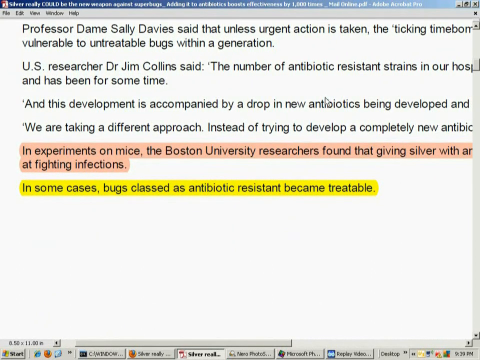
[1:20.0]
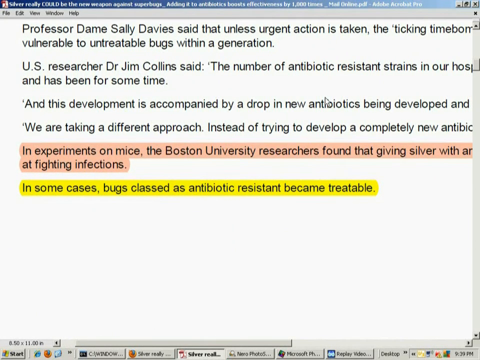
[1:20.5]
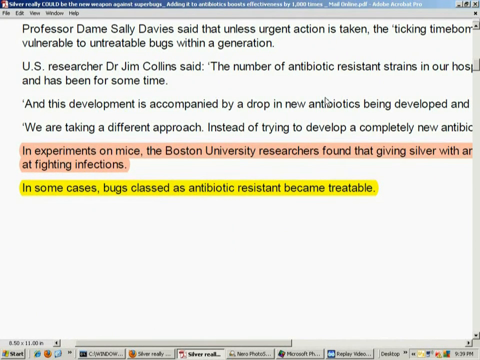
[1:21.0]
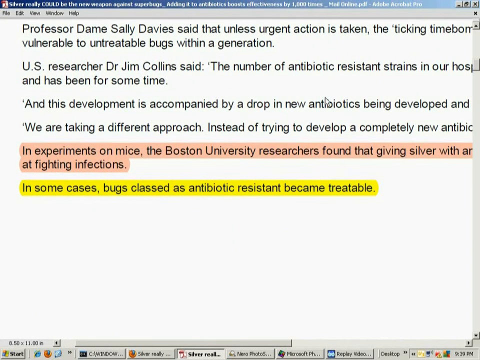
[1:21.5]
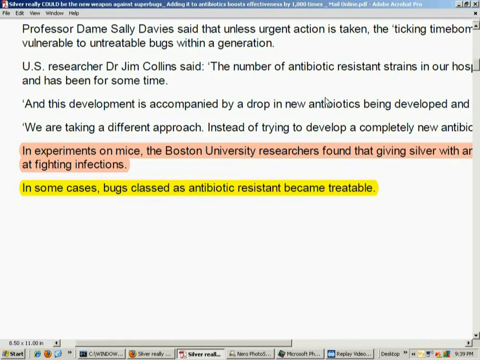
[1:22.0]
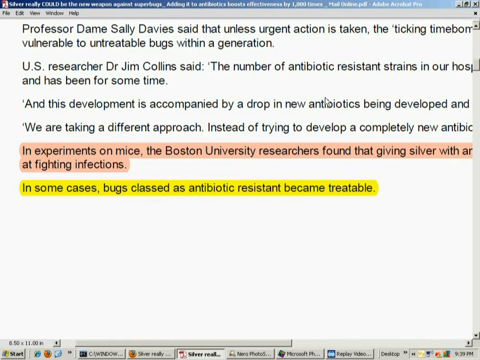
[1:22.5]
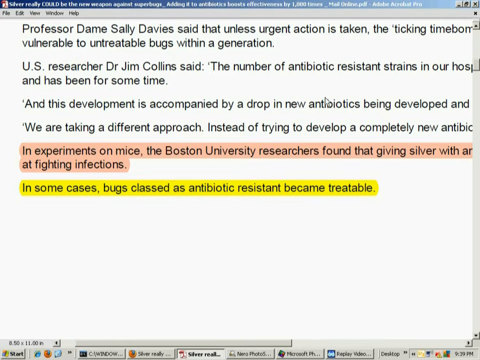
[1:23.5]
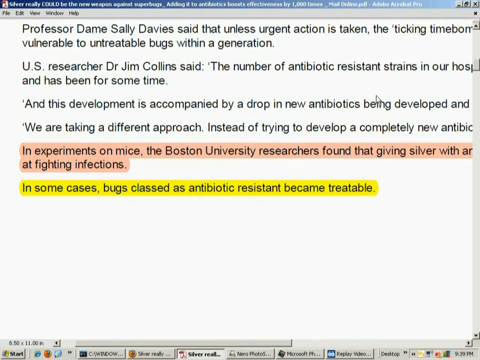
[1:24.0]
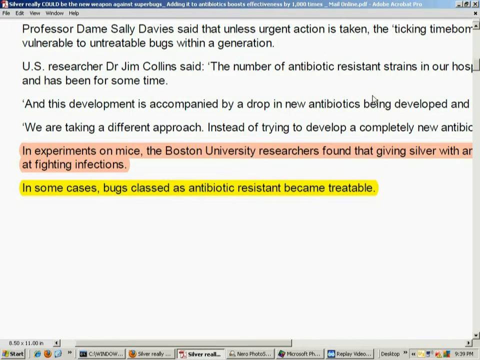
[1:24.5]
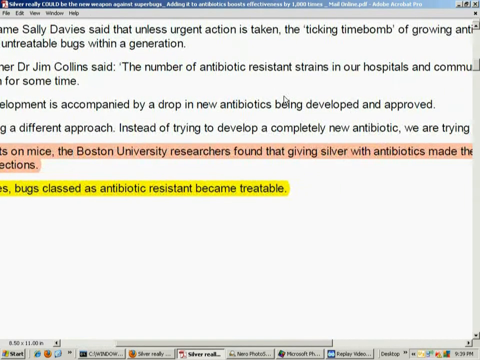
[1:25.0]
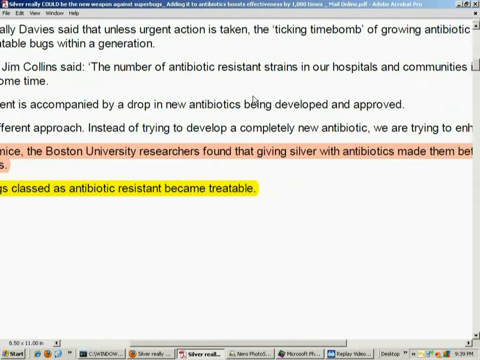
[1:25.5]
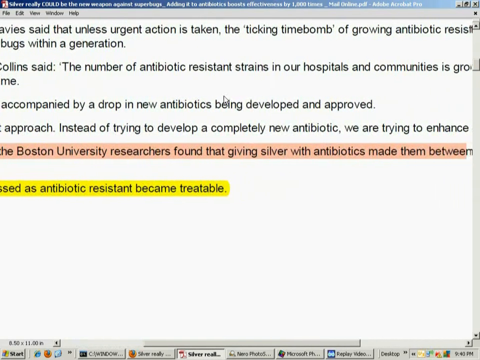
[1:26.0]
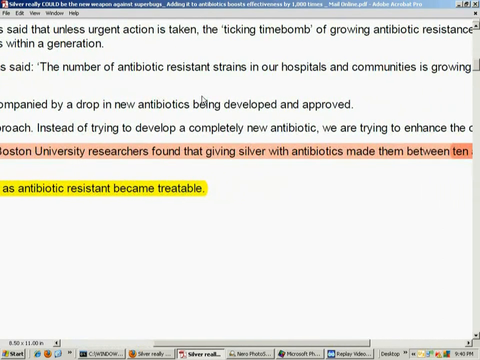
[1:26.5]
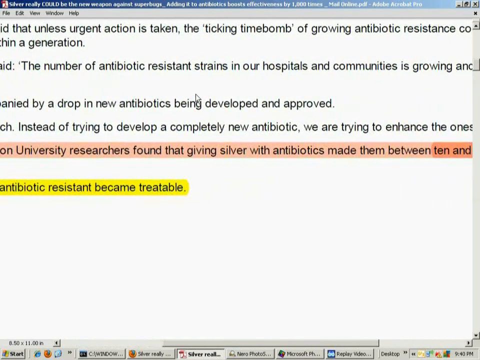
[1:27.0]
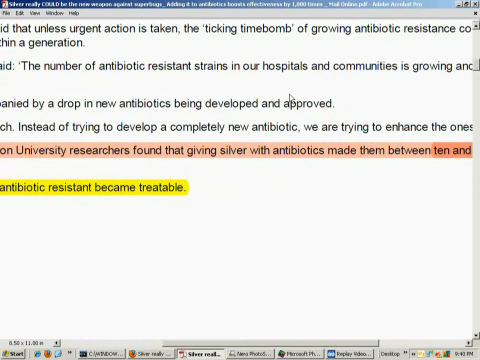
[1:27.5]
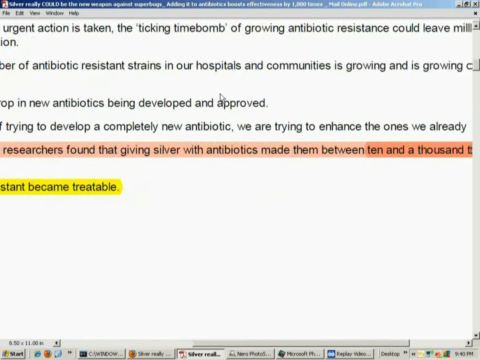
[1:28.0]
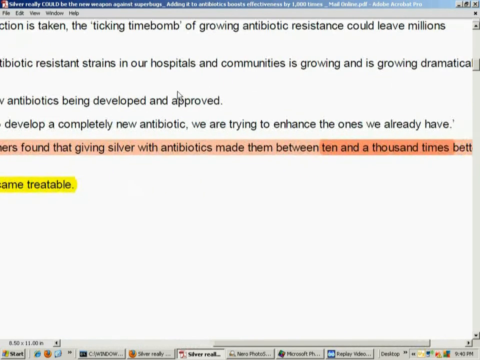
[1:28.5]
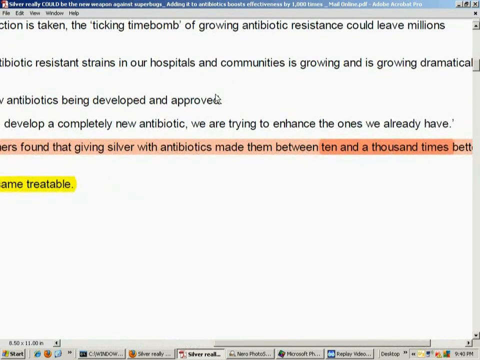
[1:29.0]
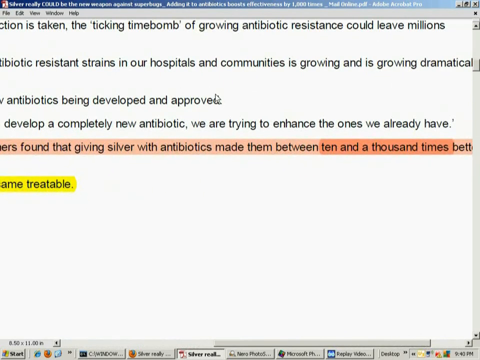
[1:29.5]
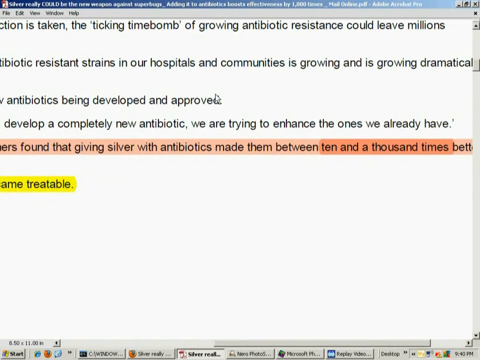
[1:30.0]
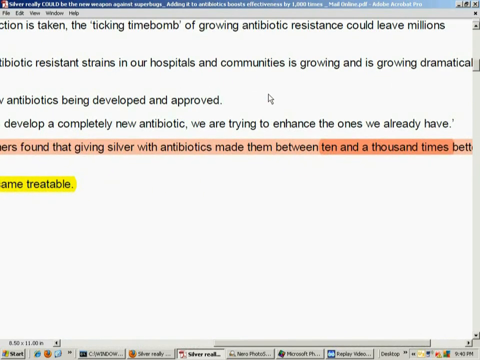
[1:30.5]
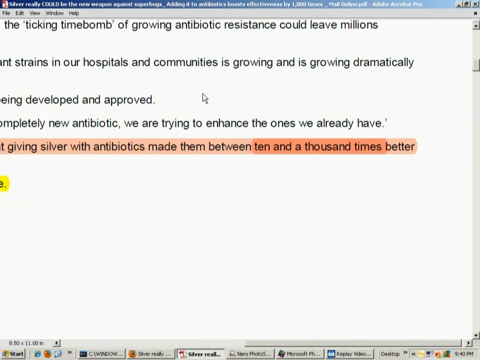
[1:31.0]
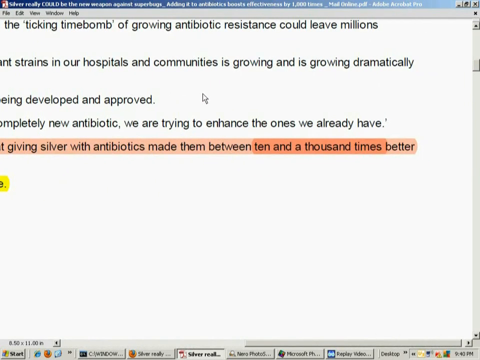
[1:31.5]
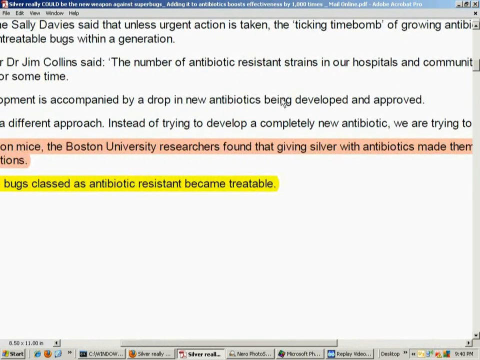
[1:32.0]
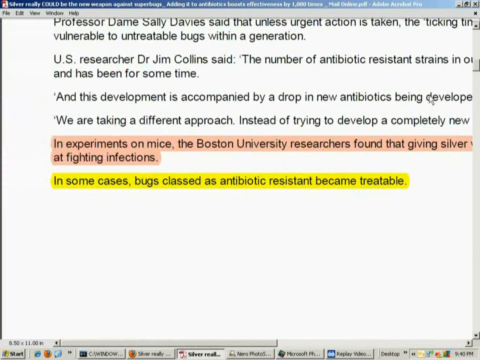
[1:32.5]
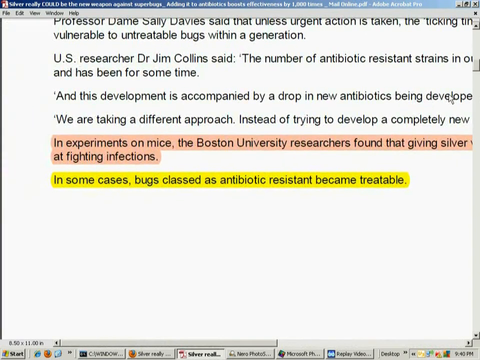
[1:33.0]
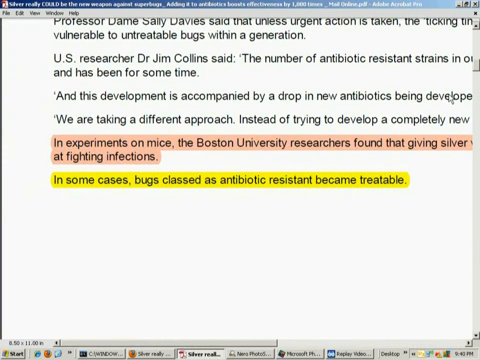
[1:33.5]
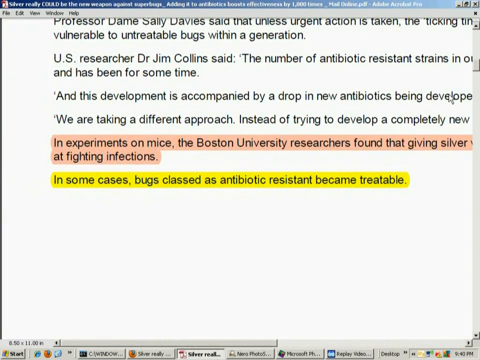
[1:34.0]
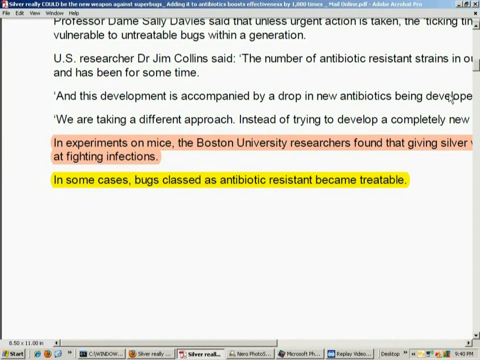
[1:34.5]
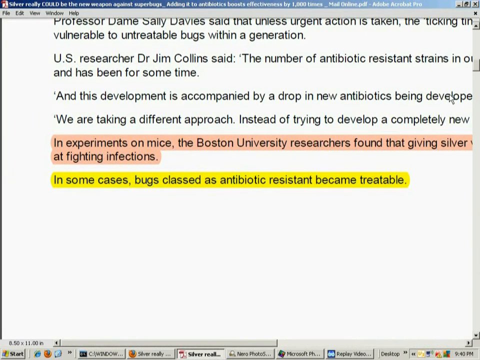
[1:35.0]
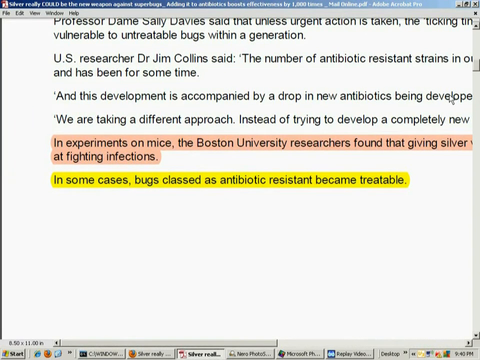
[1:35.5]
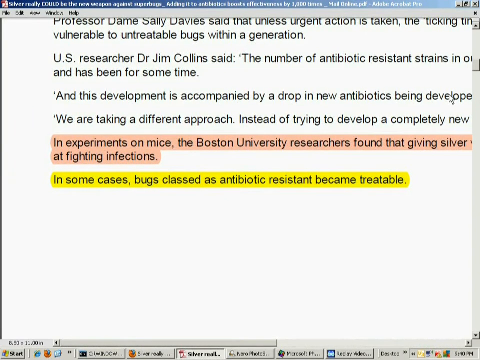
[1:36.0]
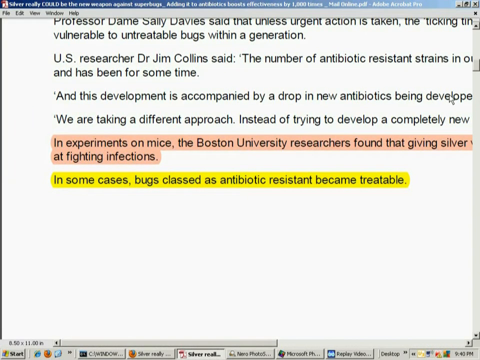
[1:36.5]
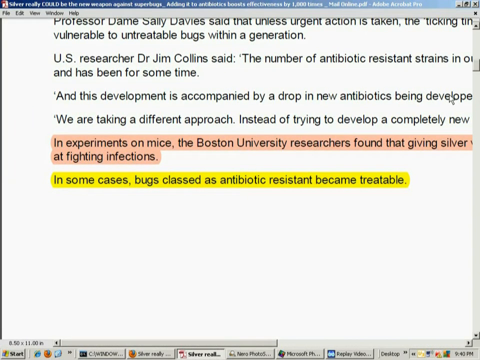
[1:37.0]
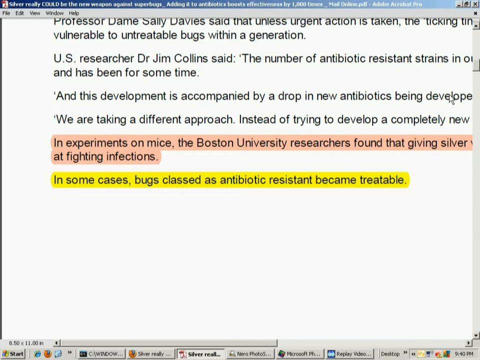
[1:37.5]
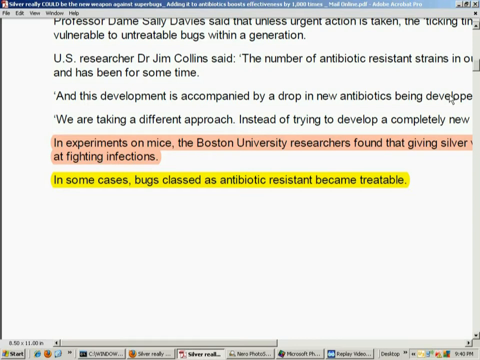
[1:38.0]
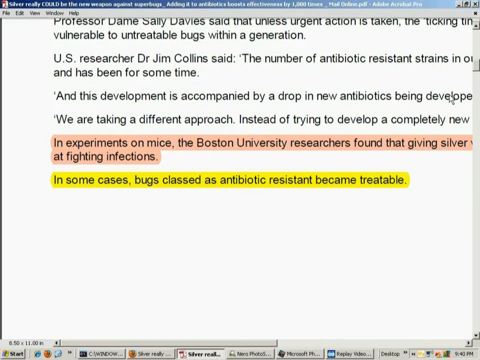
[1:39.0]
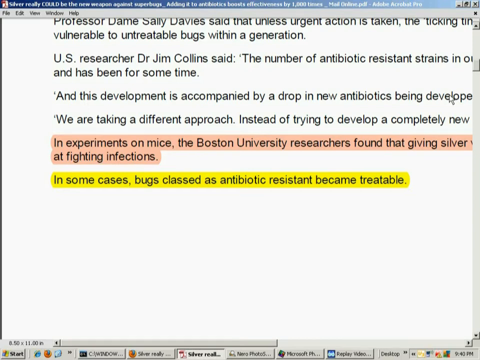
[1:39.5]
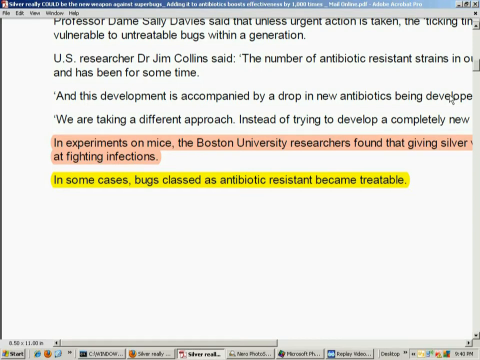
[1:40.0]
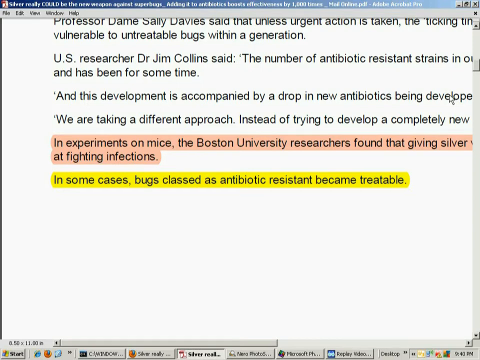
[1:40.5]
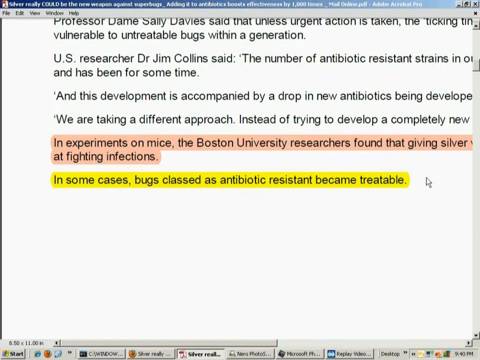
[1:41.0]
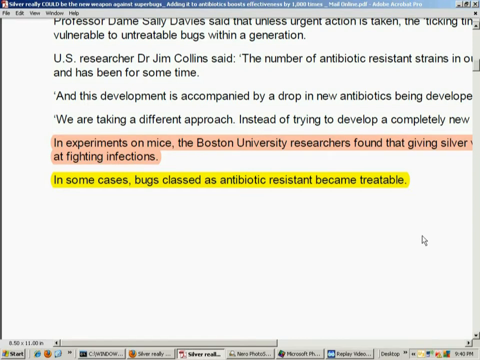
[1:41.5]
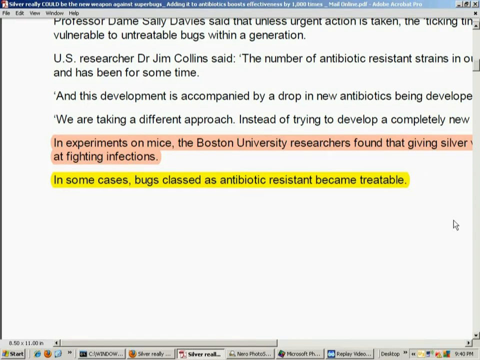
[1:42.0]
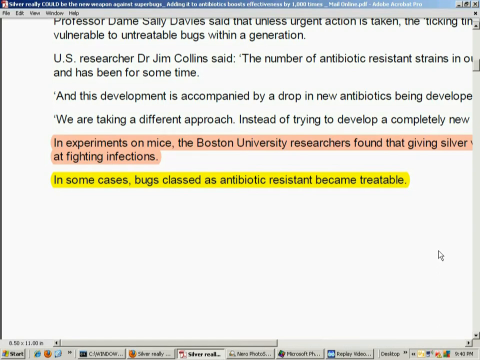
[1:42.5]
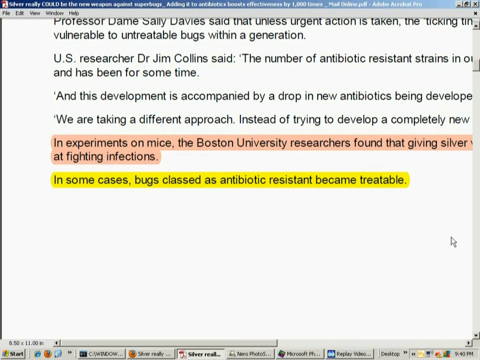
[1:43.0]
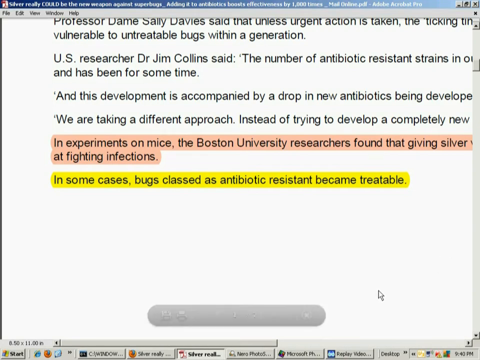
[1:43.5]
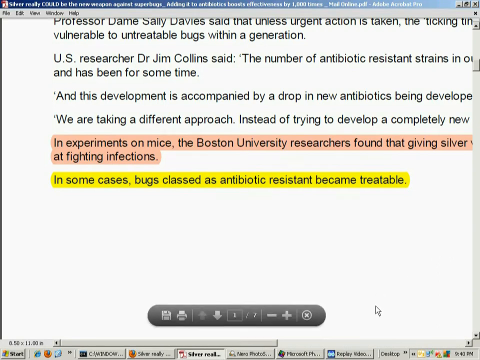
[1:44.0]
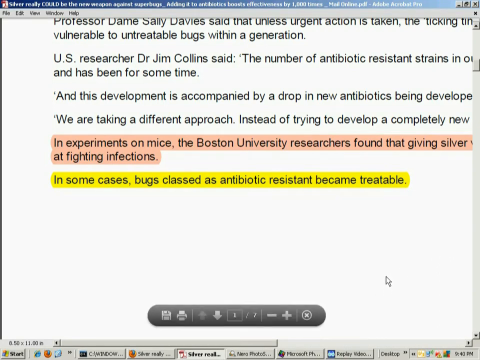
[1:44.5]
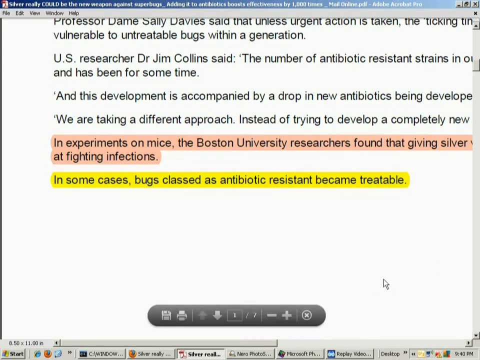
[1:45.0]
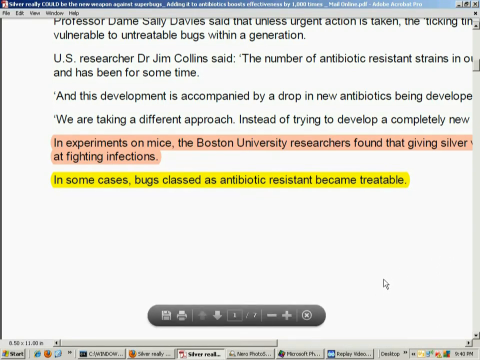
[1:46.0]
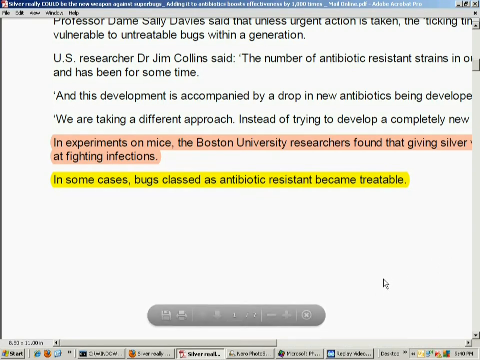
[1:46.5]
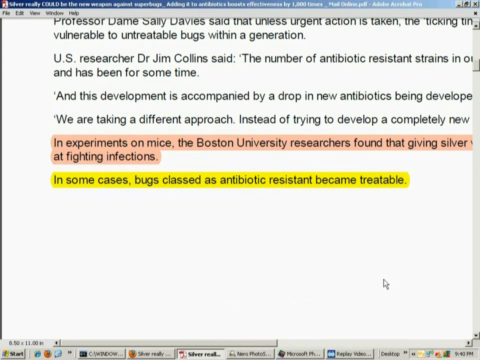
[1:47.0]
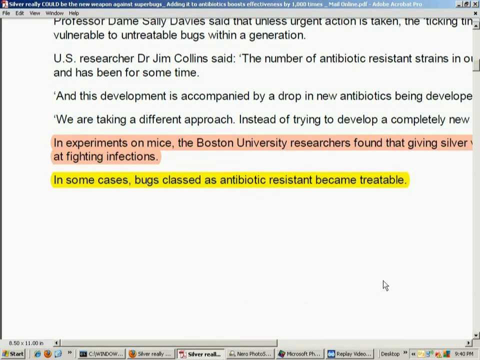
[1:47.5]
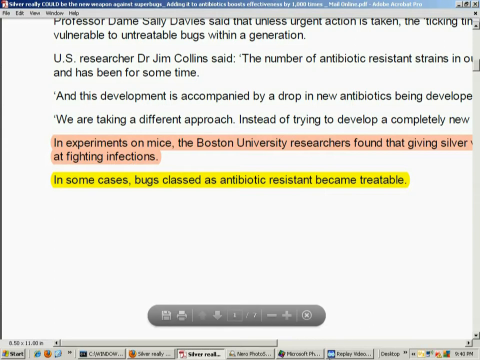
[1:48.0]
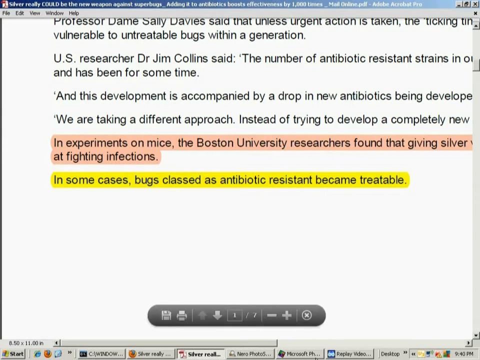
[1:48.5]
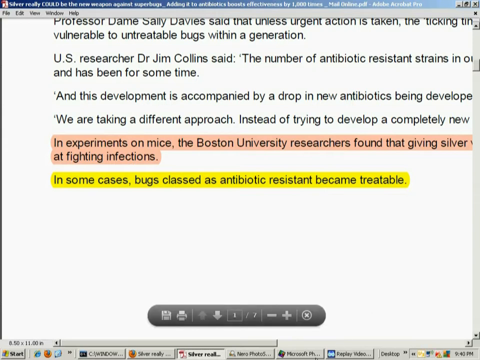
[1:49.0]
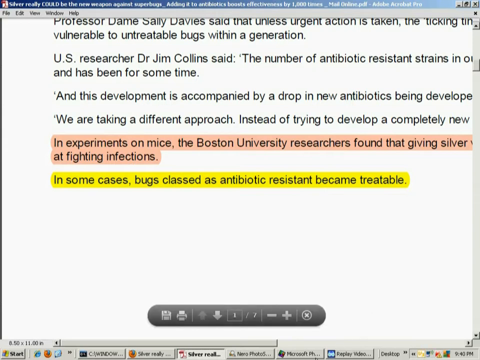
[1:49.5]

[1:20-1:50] The article text is now fully visible. It reads "Professor Dame Sally Davis said that, unless urgent action is taken, the ticking time bomb" and continues that growing antibiotic resistance could leave millions "vulnerable to untreatable bugs within a generation". It goes on: "U.S. researcher Dr. Jim Collins said the number of antibiotic resistance strains in our hospital", "And has been for some time. And this development is accompanied by a drop in new antibiotics being developed and approved." Then it reads "we are taking a different approach instead of trying to develop a completely new antibiotic, we are trying to enhance the ones we already have", and "in experiments on mice, the Boston University researchers found that giving silver" with antibiotics "made them between 10 and a thousand times better at fighting infections", while bugs classified as antibiotic resistant became untreatable in some cases.